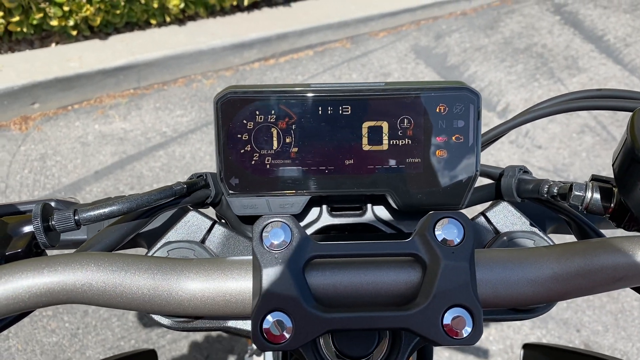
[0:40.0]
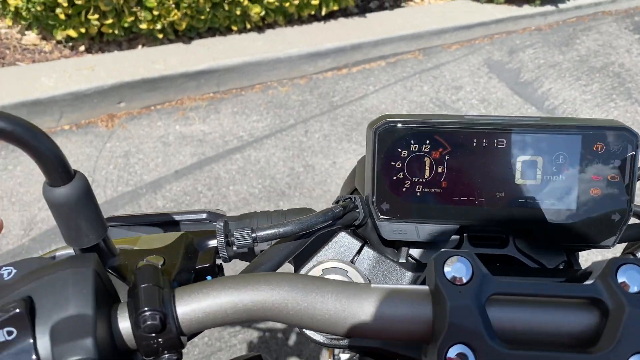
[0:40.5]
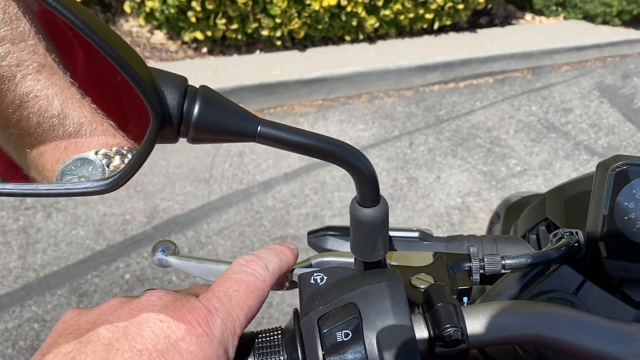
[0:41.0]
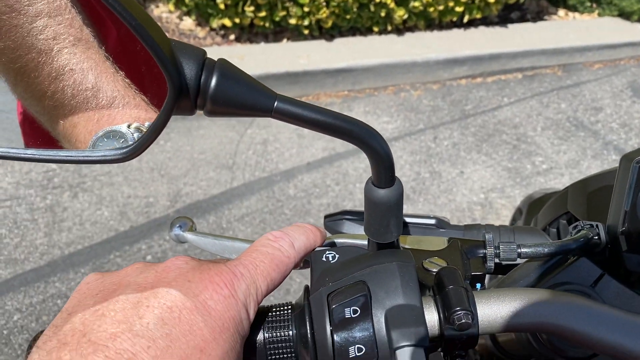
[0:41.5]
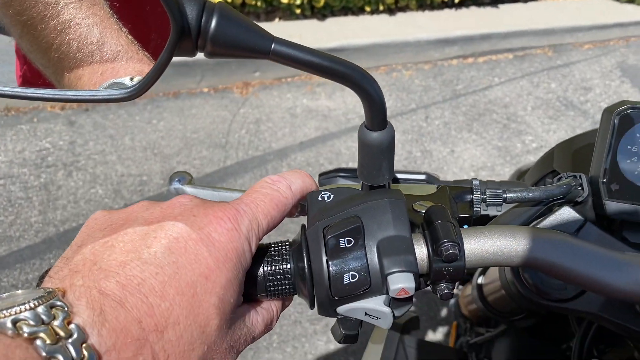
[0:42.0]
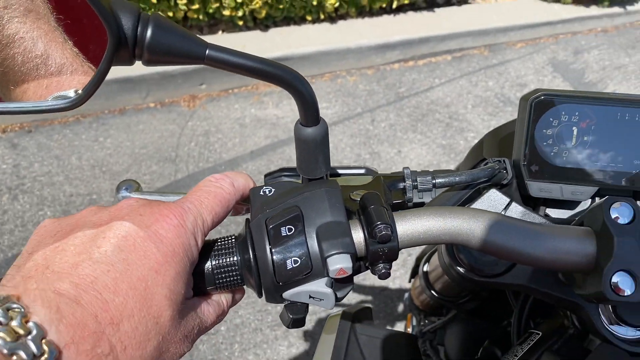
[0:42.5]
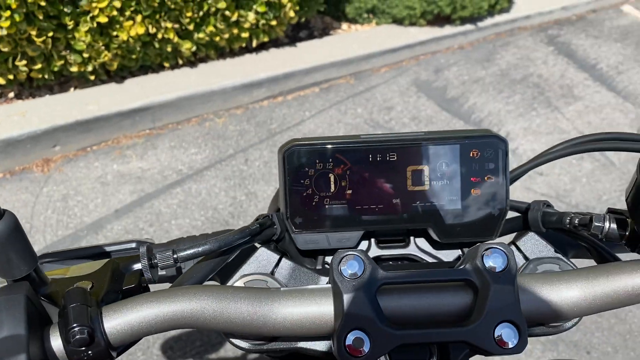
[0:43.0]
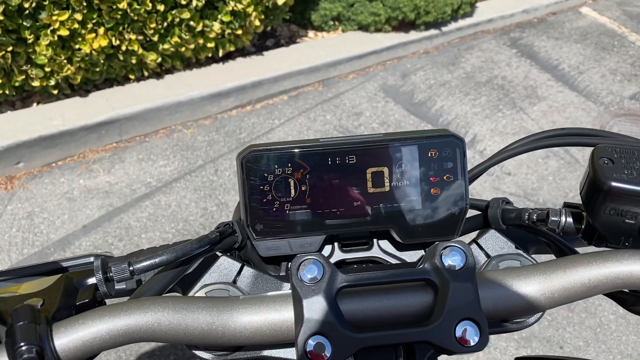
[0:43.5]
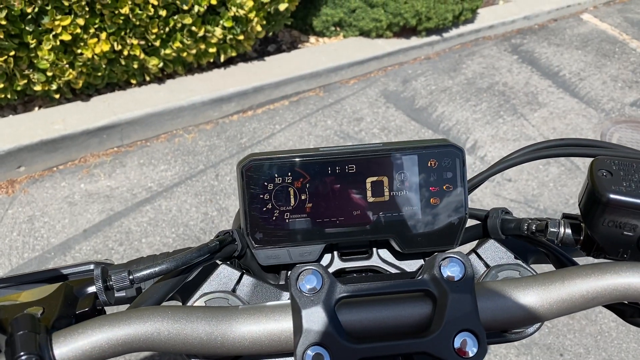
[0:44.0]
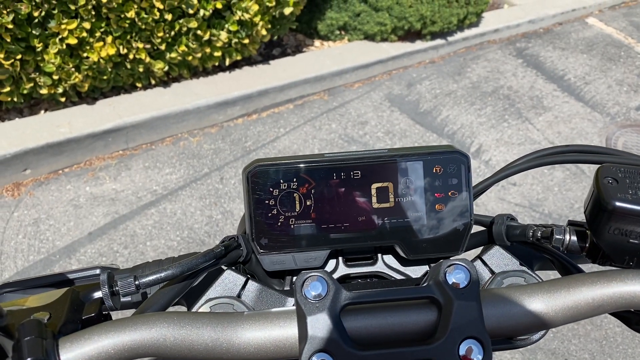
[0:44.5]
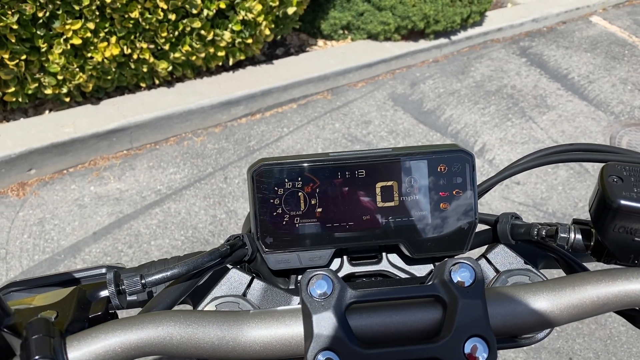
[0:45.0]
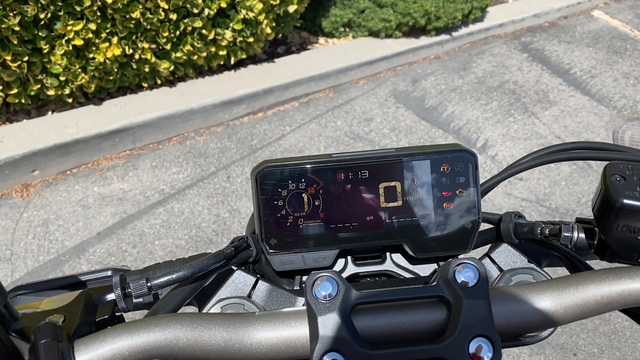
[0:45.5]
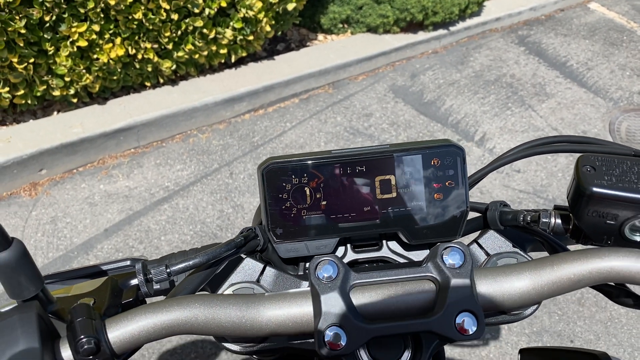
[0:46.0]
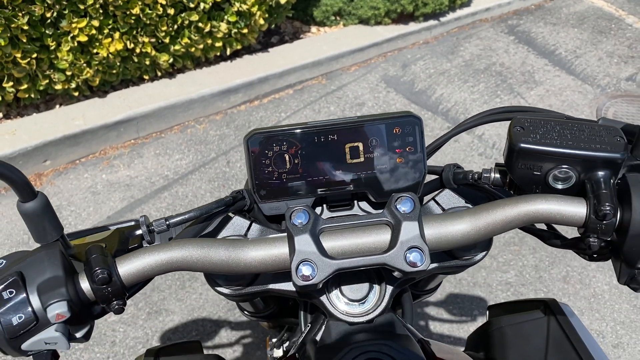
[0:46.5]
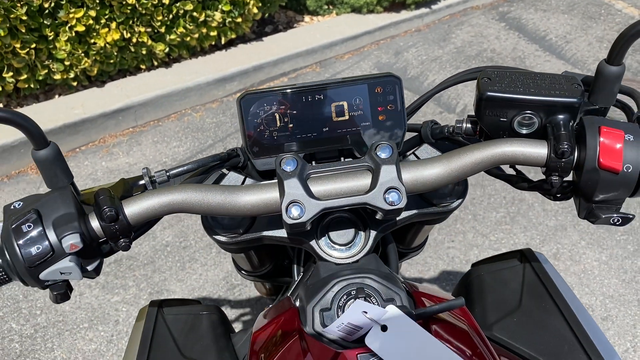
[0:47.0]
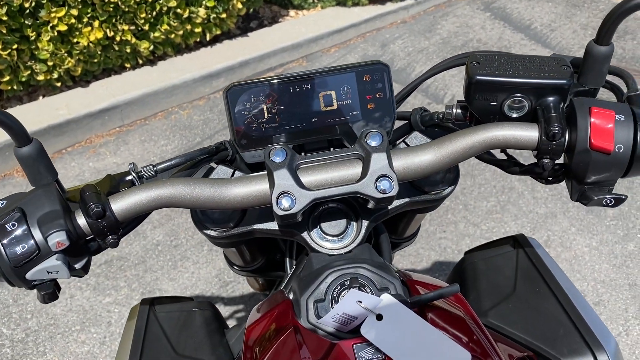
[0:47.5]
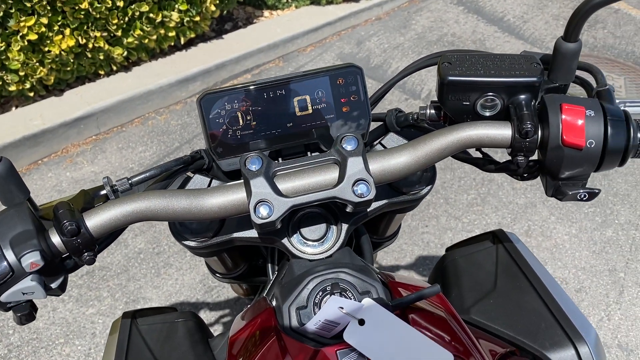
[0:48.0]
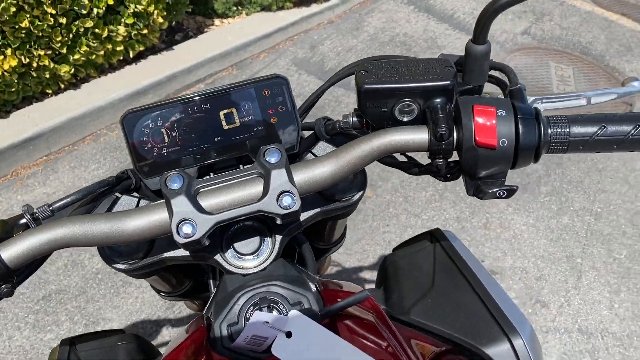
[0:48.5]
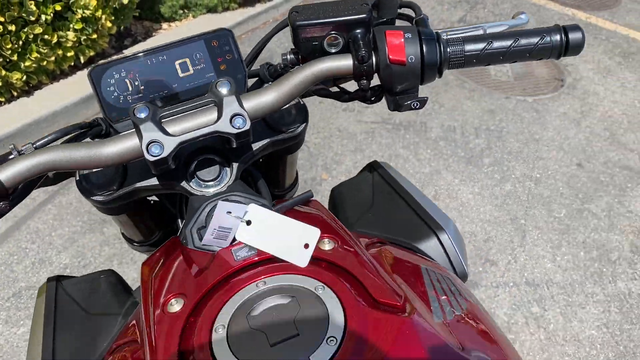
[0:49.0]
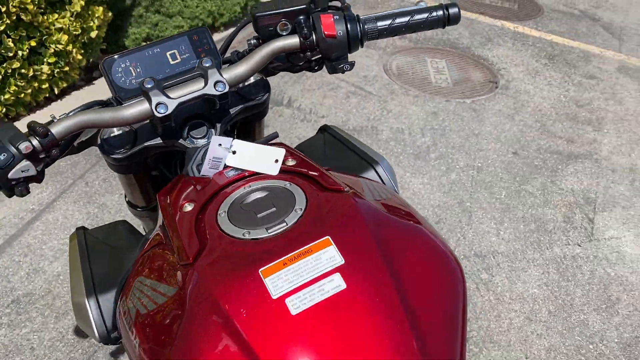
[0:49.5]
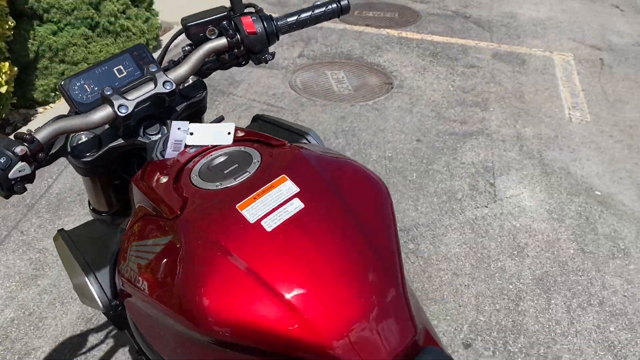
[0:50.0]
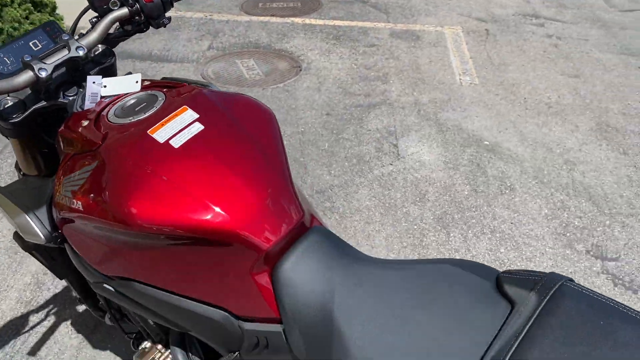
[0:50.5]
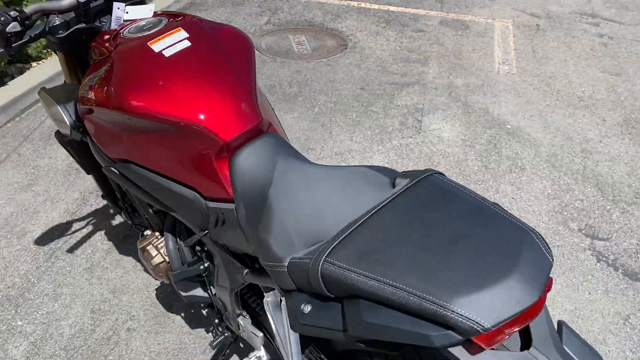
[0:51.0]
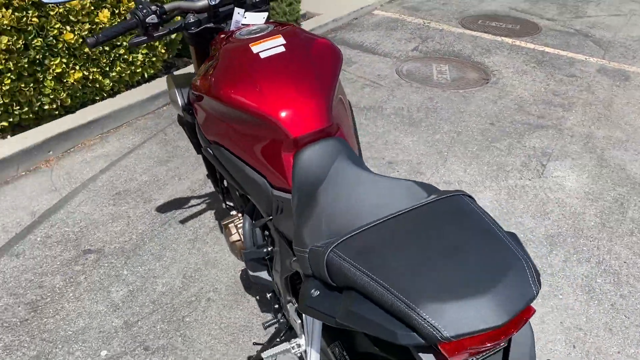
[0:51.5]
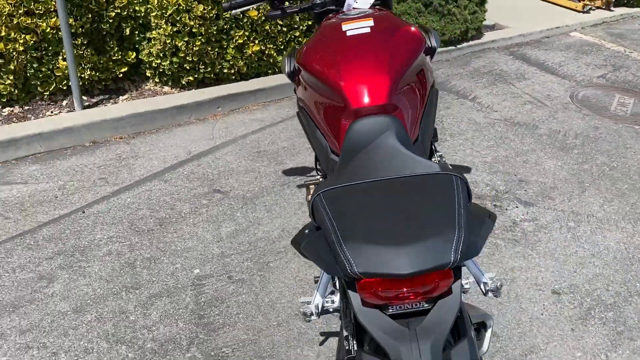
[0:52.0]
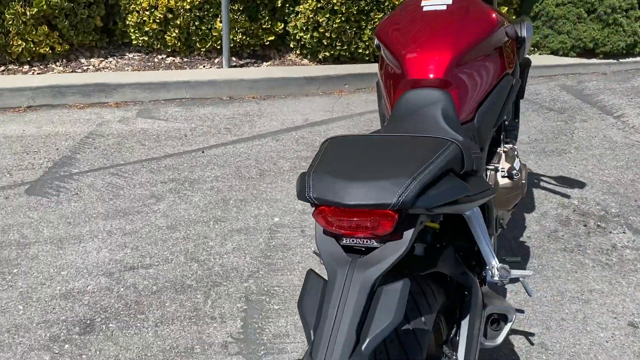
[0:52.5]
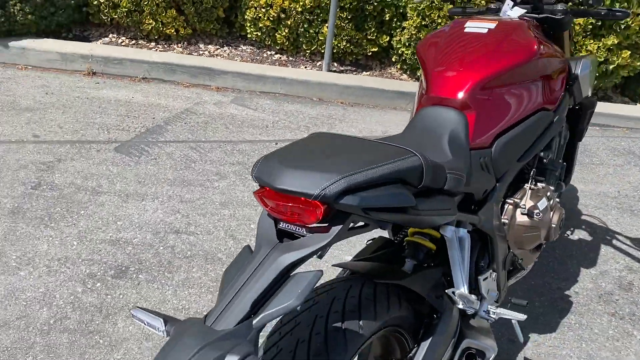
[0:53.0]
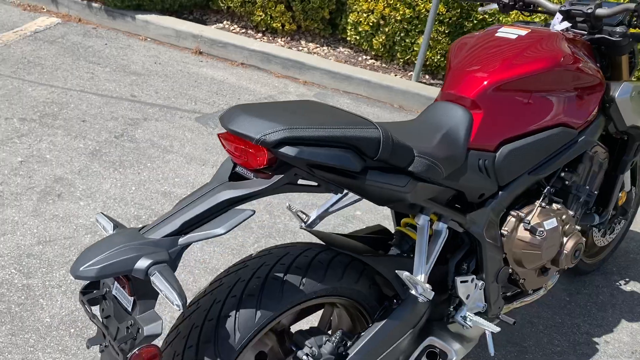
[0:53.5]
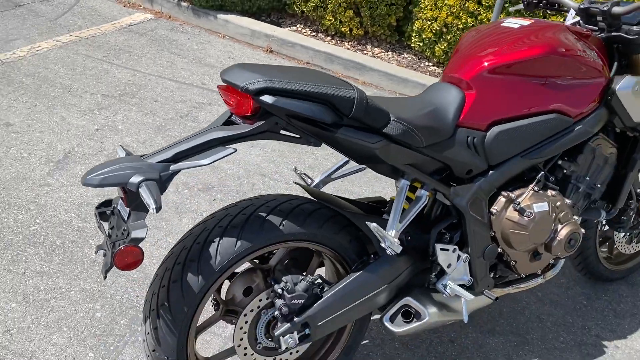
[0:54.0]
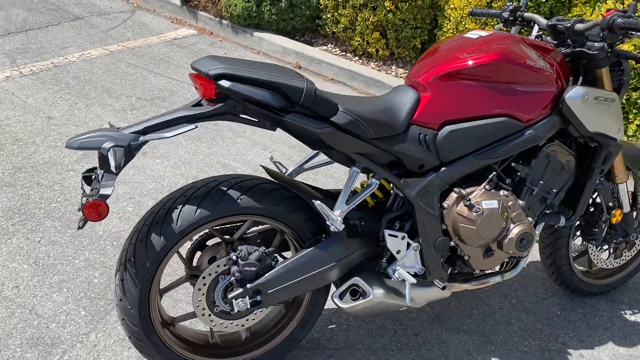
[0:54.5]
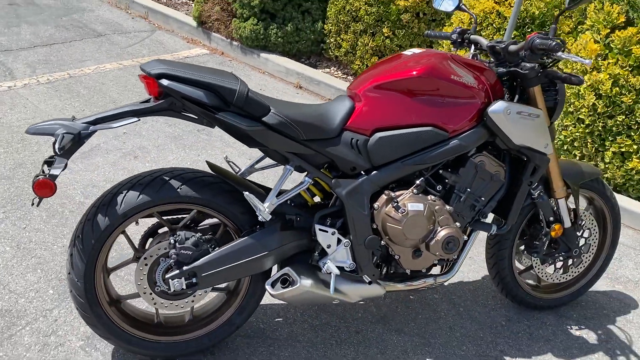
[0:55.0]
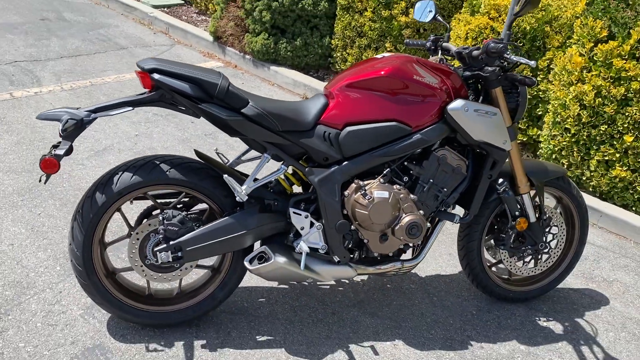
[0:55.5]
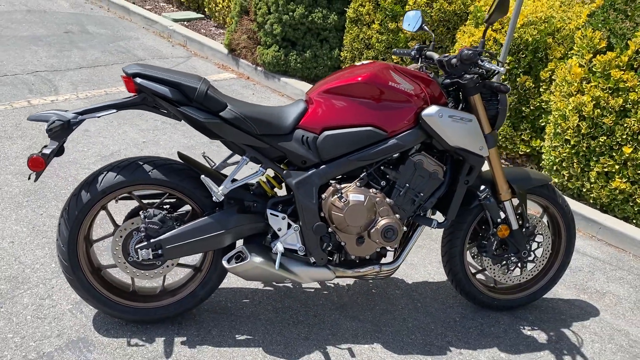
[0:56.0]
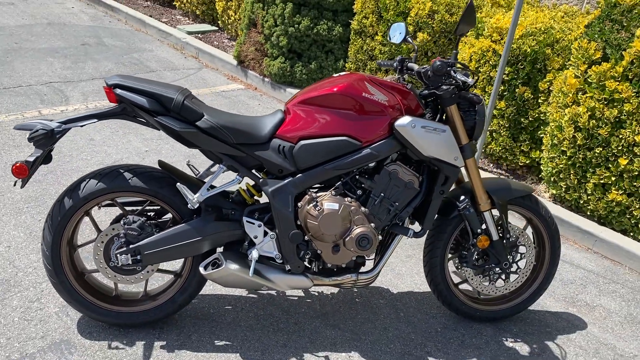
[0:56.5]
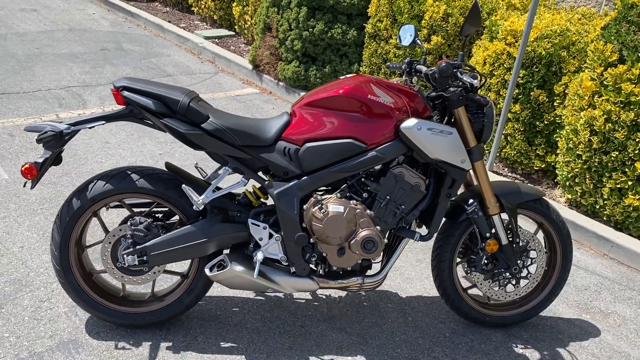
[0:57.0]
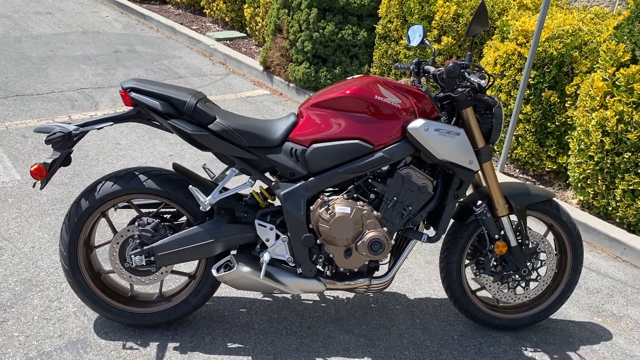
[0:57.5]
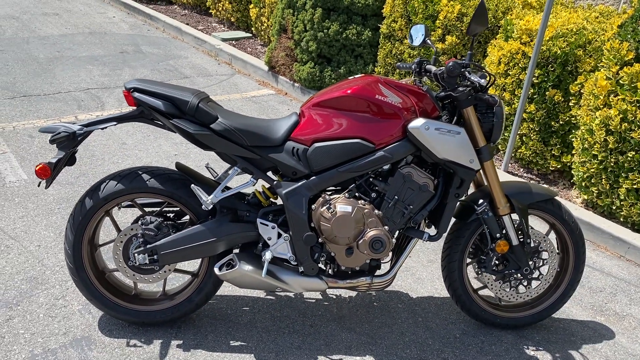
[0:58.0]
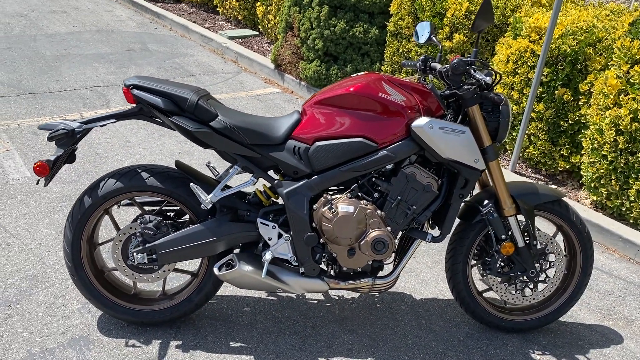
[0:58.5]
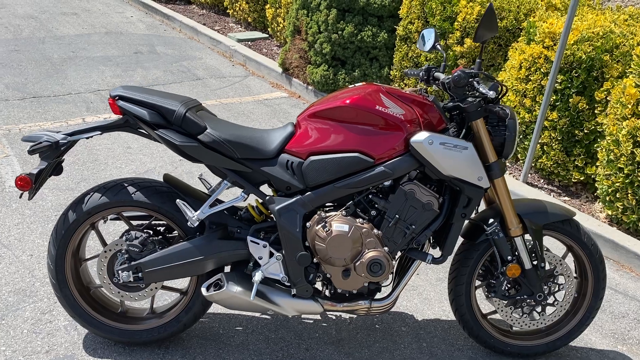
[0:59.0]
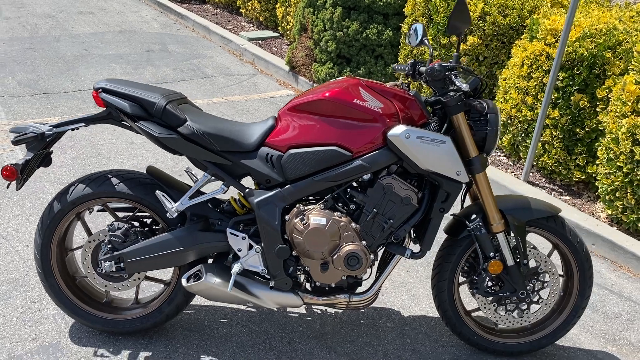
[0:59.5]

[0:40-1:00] The Honda motorcycle has a tag on its keys, possibly because someone is repairing it or it has not yet been sold. A phone is attached to the front of it, showing zero miles per hour; on the left side there is some type of measurement going from zero at the bottom up to 14, possibly showing how much it is revving, and the time is visible. The man points out the accelerator, what may be the clutch, and the mirrors, then comes around to the other side of the motorcycle, which is red, black, silver and gold. In the background there is a curb and a bush like a hedge, with what looks like juniper on the ground next to it. He is in a parking lot, where there is a pole, maybe for handicap parking, and a cover for a drain or sprinklers.